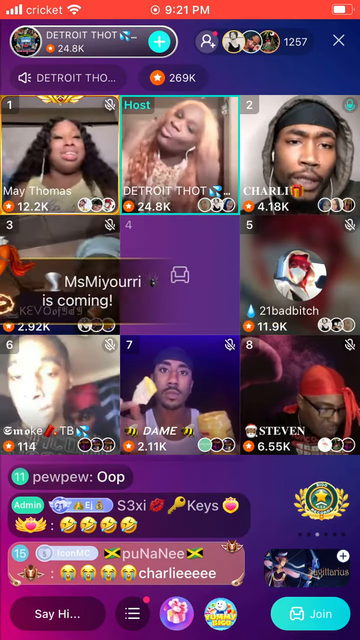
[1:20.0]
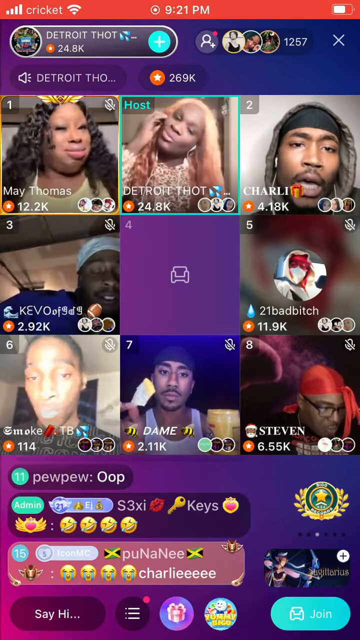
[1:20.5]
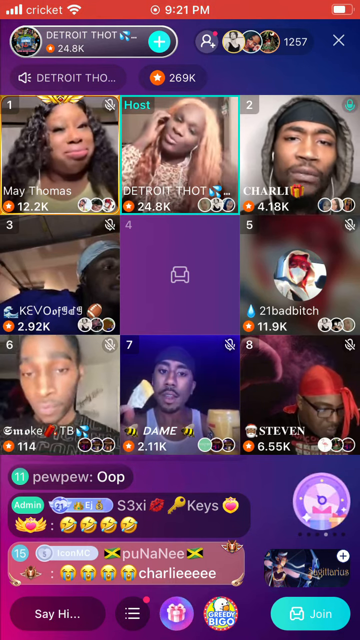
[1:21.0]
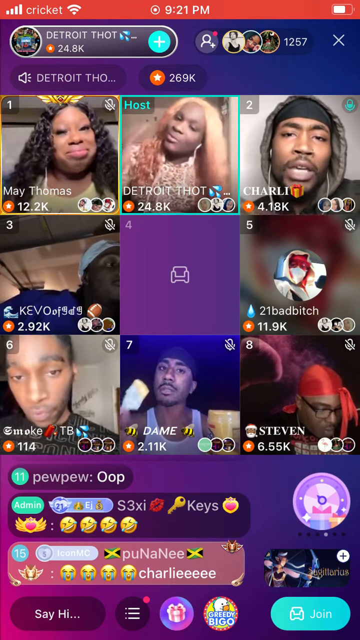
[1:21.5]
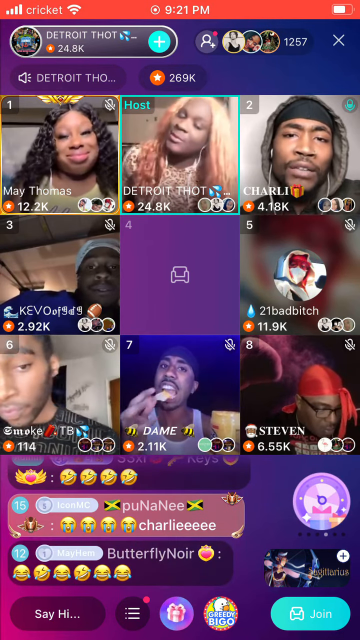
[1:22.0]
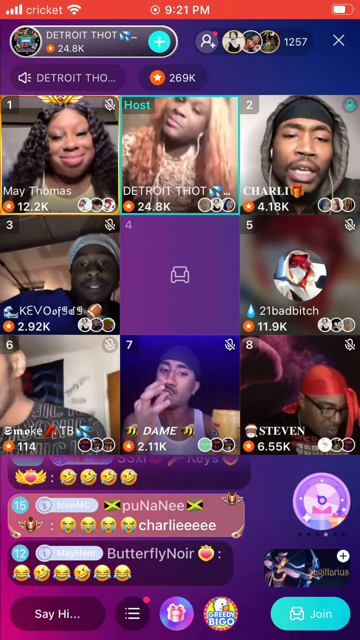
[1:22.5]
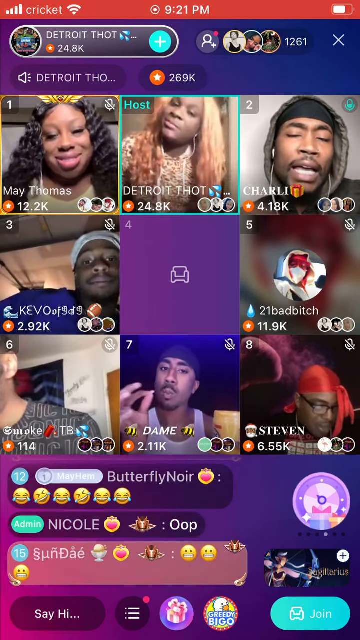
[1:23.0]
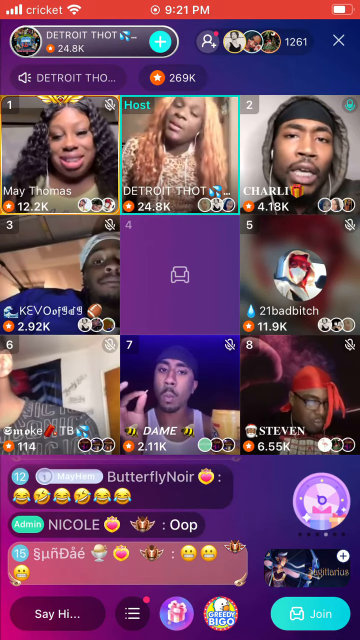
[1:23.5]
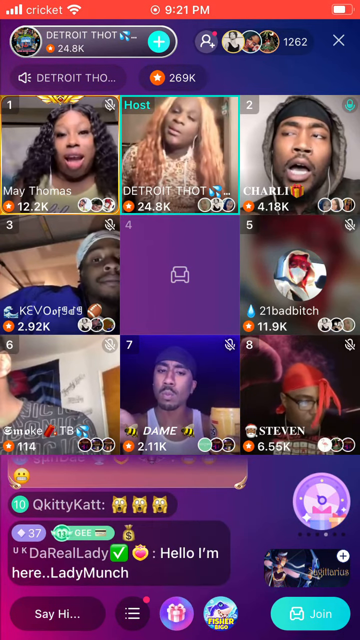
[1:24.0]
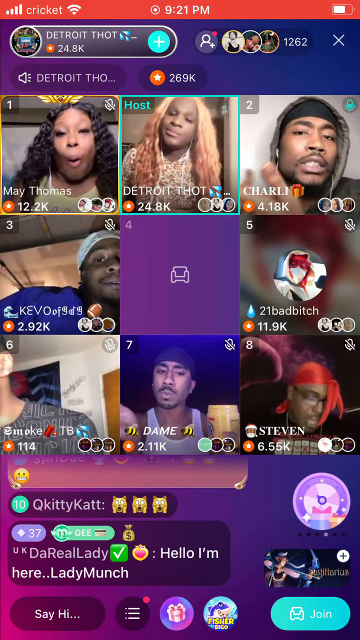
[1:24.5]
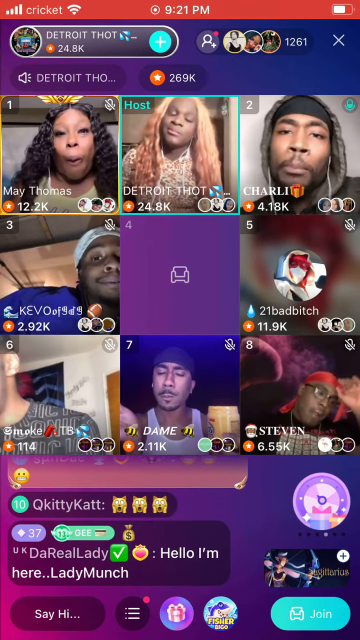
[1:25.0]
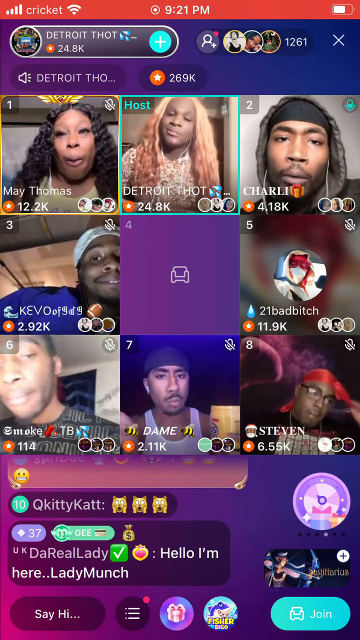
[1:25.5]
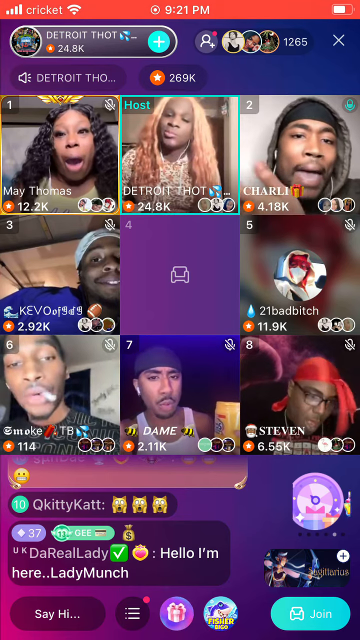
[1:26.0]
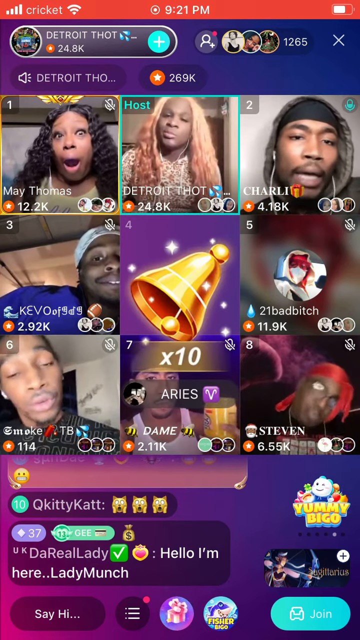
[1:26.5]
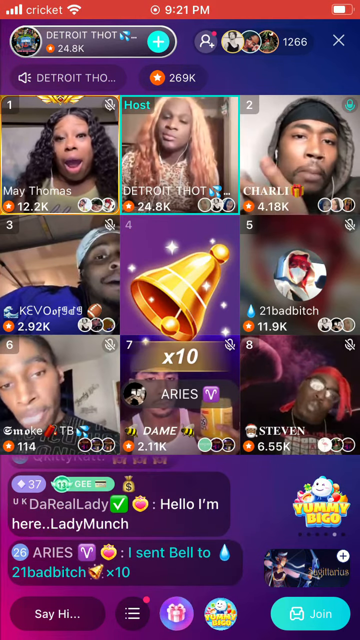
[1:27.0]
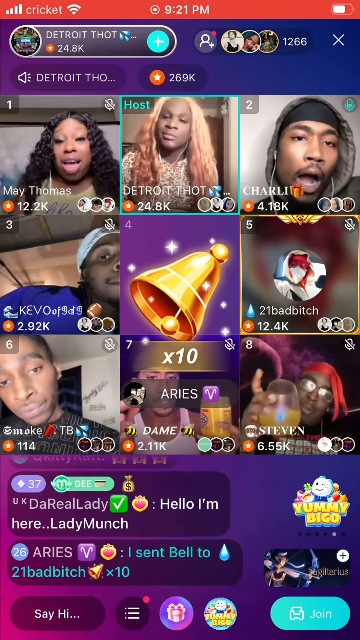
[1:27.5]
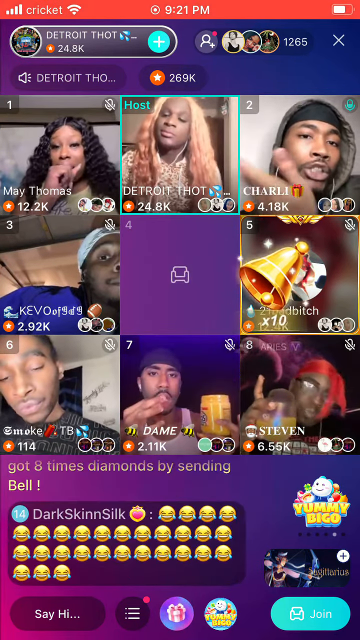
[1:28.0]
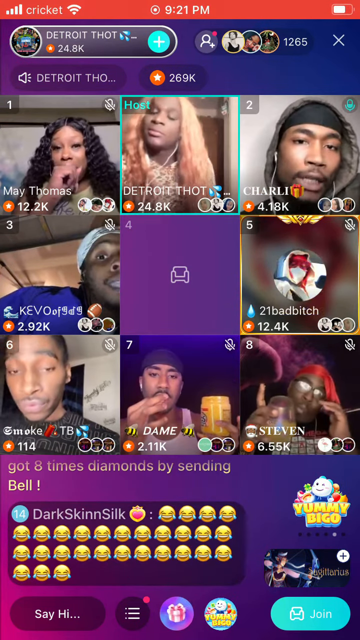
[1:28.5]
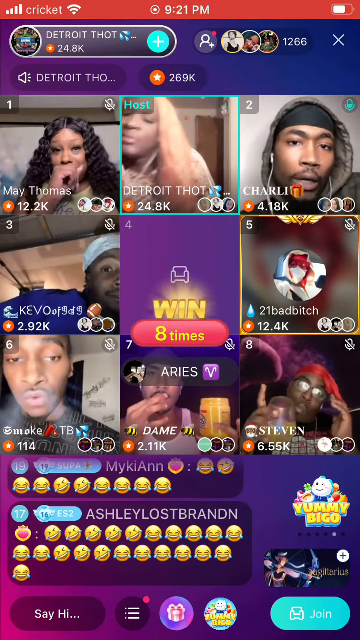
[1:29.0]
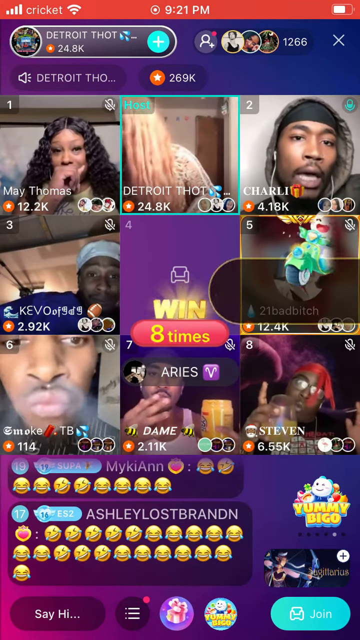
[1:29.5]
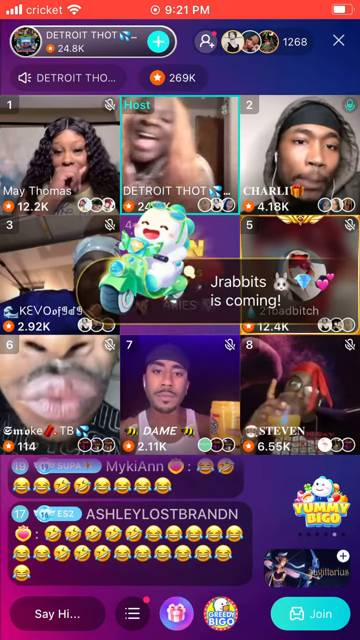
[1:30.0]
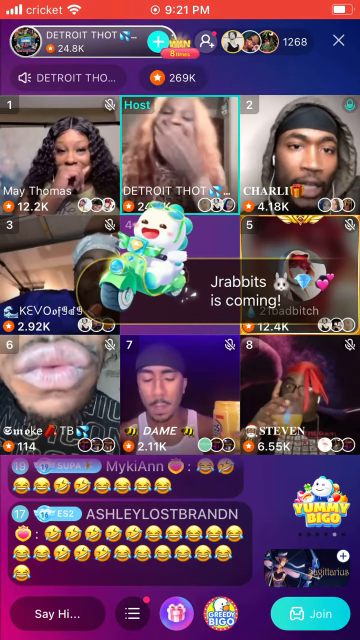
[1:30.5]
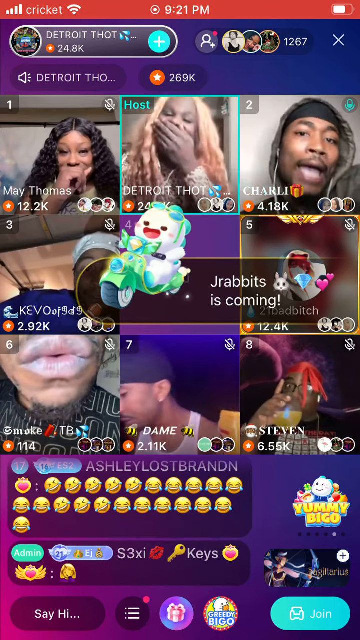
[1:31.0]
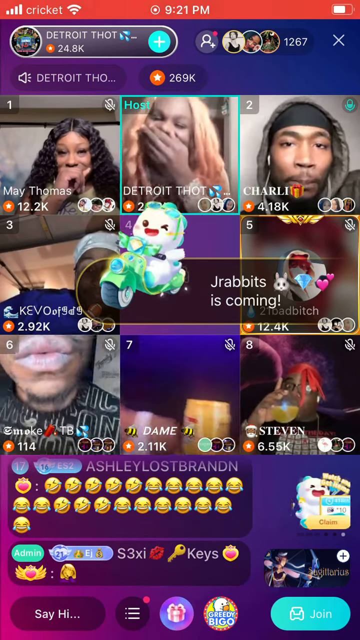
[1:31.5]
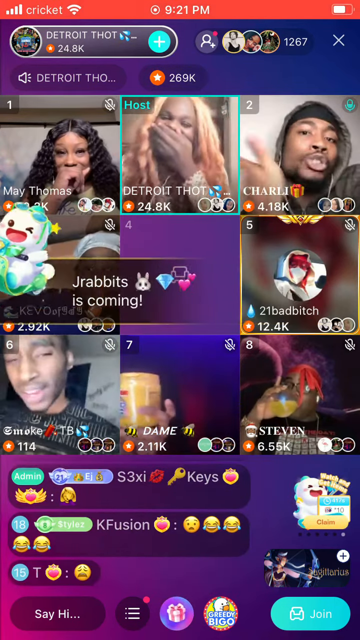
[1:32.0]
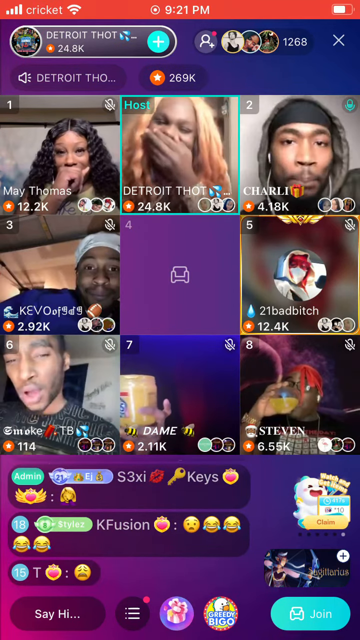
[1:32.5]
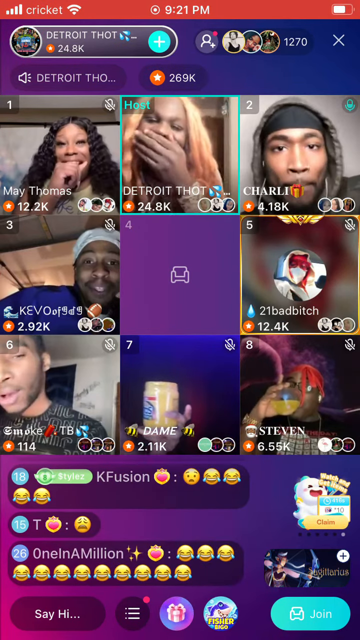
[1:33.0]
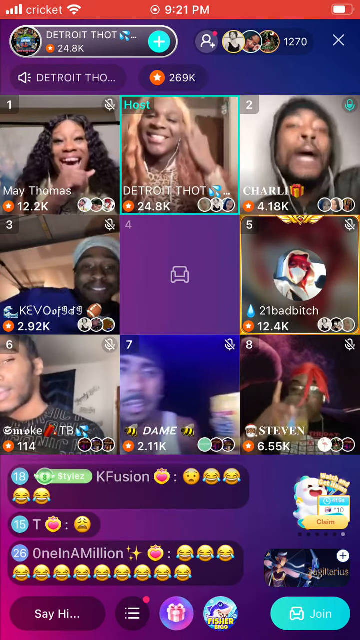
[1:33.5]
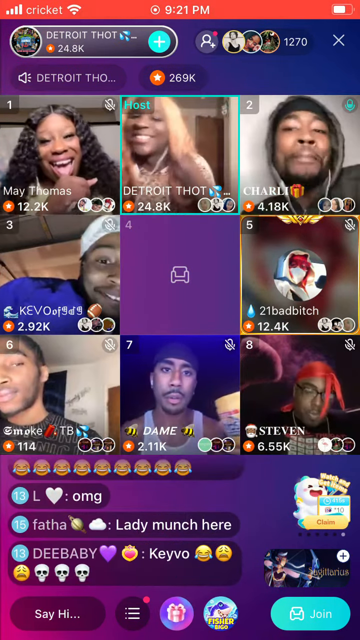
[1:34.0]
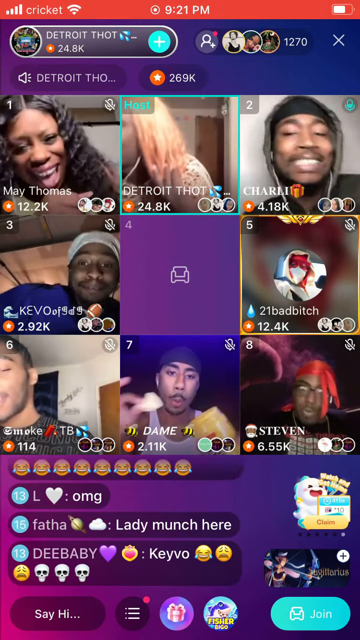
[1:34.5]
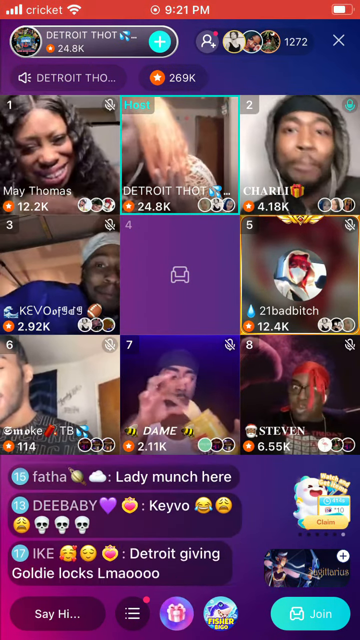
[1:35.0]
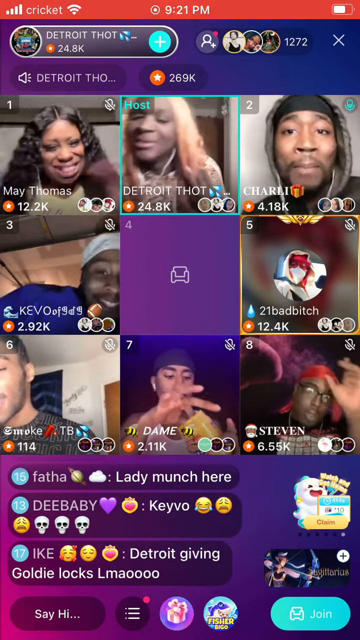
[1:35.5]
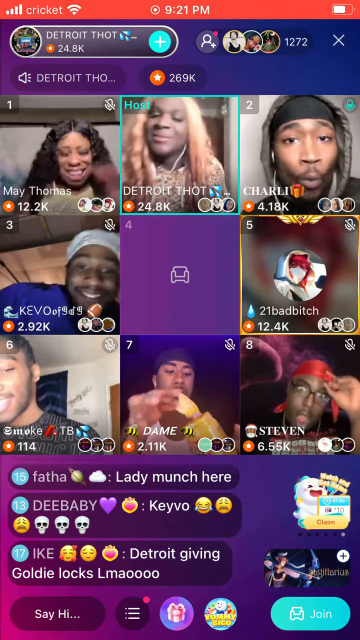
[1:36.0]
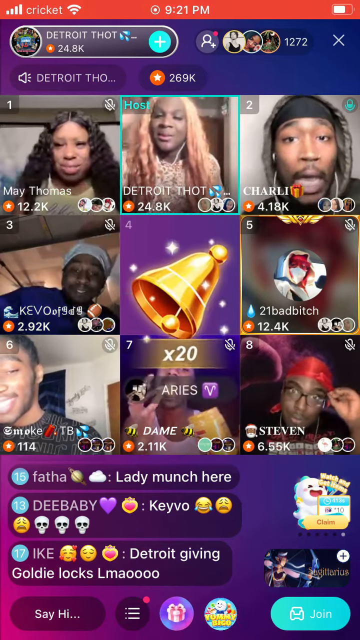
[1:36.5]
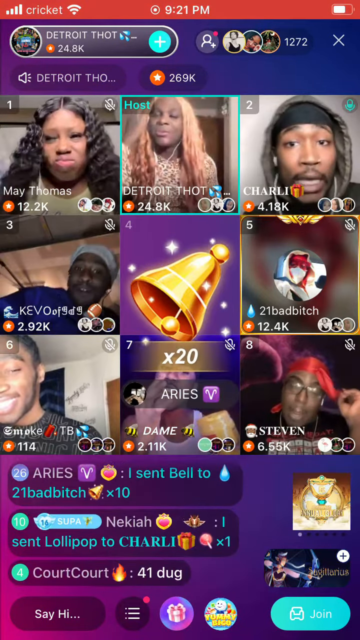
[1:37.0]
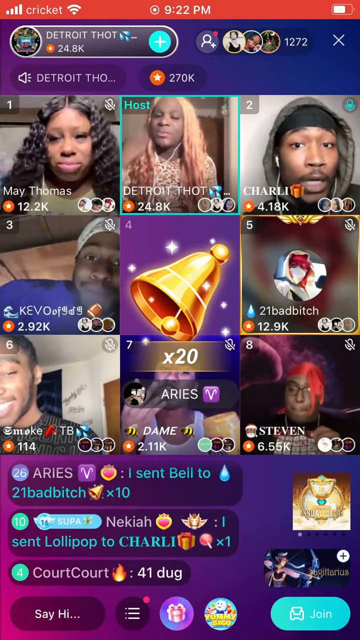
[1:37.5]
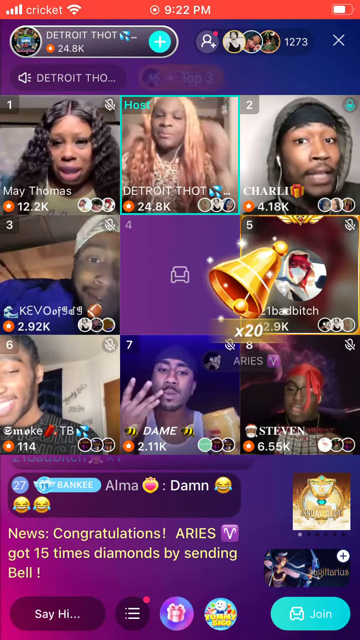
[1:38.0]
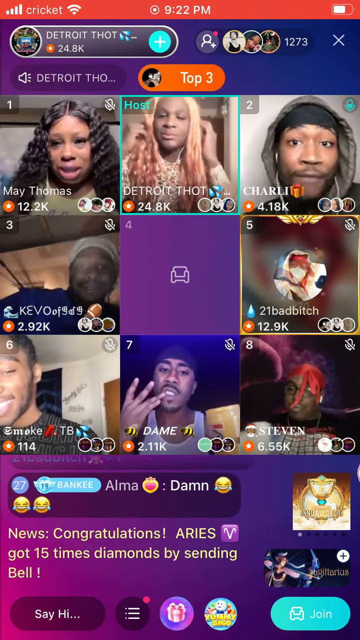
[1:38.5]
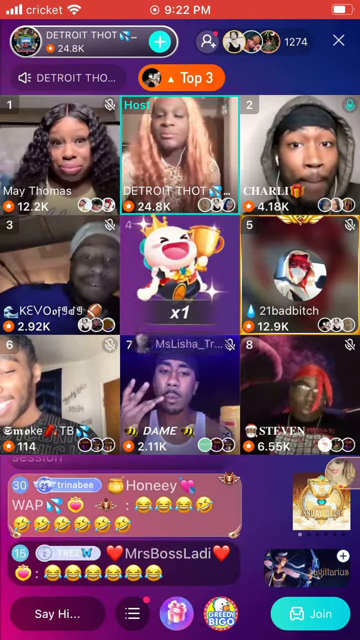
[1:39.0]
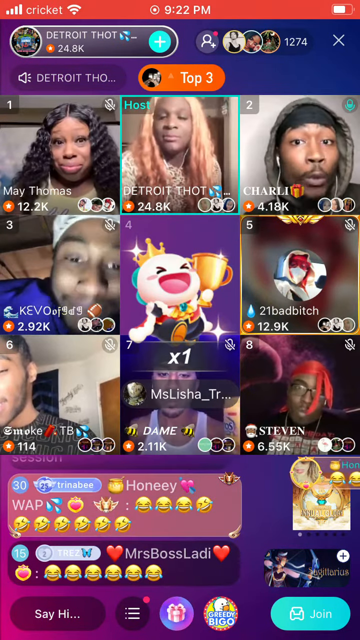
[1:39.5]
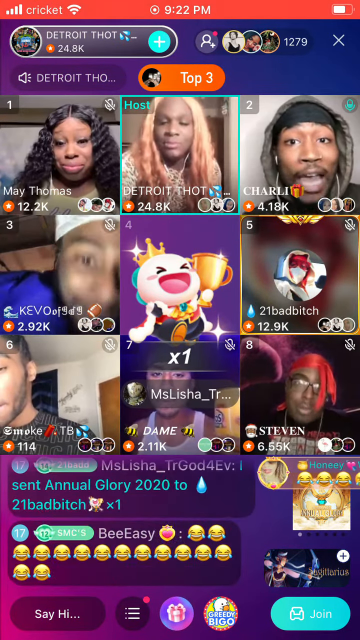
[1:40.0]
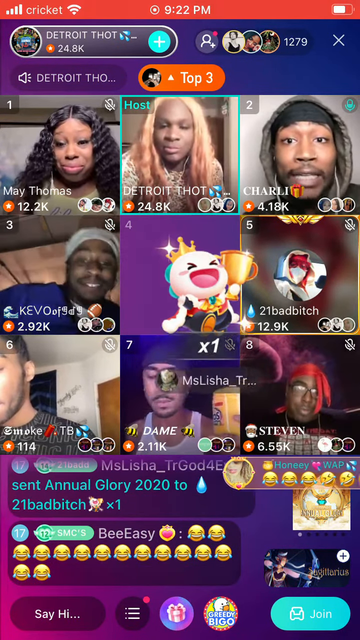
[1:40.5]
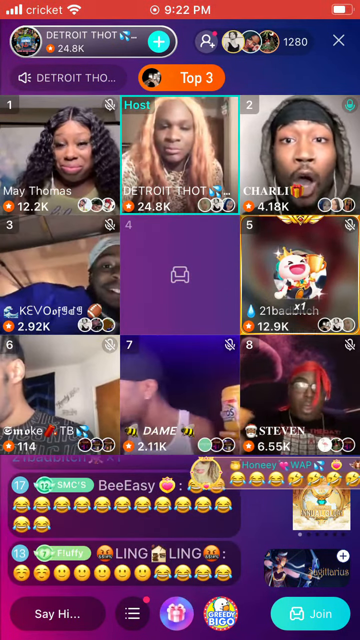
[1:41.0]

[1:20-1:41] The live stream continues to show all of the participants, with names shown including Mae Thomas, Detroit Thought, Pretell, Tevo, Tushad and a few others. Plenty of reactions keep appearing in the stream. After a flurry of reactions, Mae Thomas, the girl in the top left with curly black hair, seems to get a bit emotional and sad before the video cuts out, while the chat keeps adding tons of emoticons, including laughs, fire emojis and other emojis. The setting stays on the live stream platform, with all of the individuals' webcams visible in the frame.